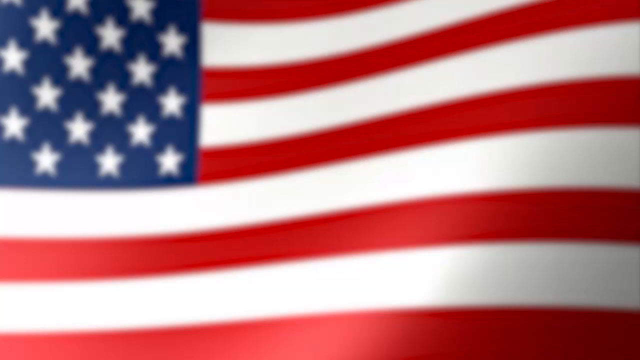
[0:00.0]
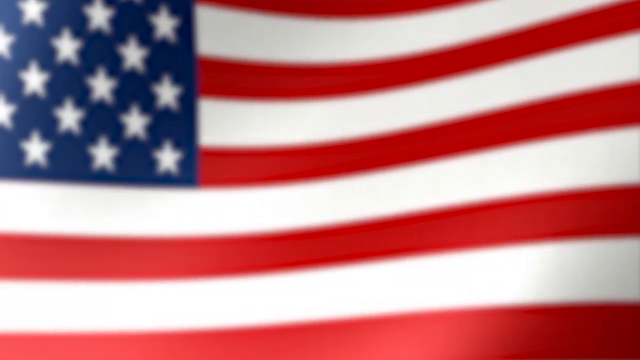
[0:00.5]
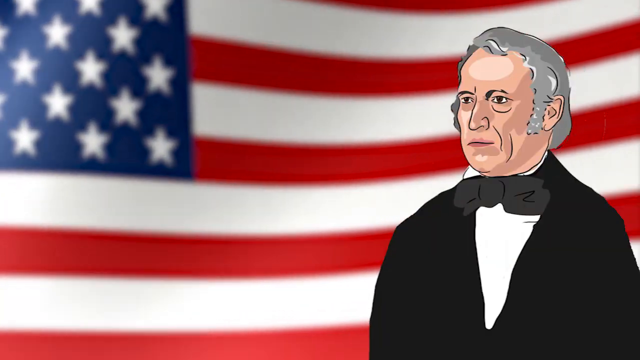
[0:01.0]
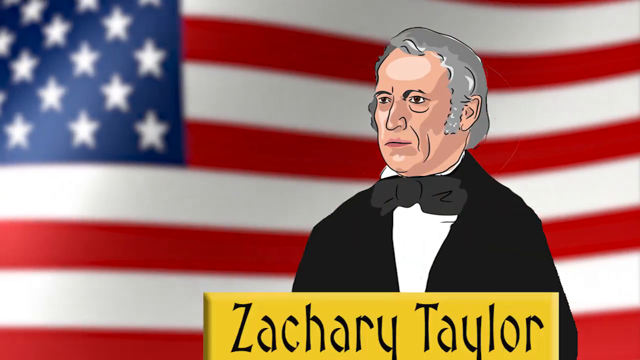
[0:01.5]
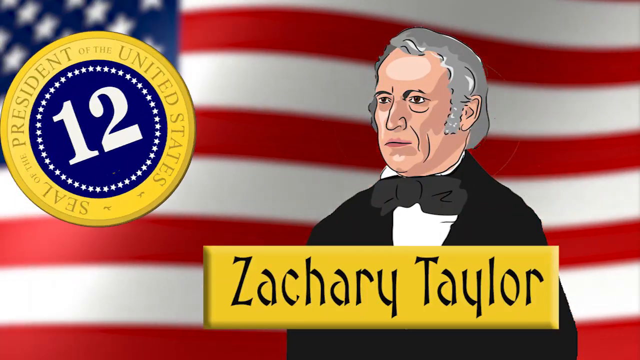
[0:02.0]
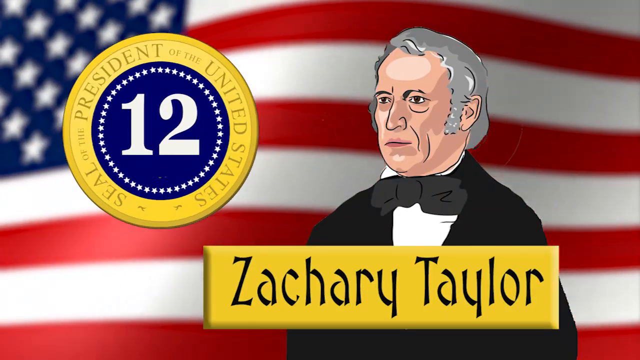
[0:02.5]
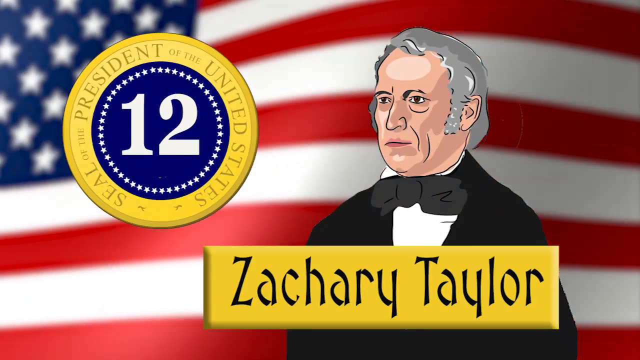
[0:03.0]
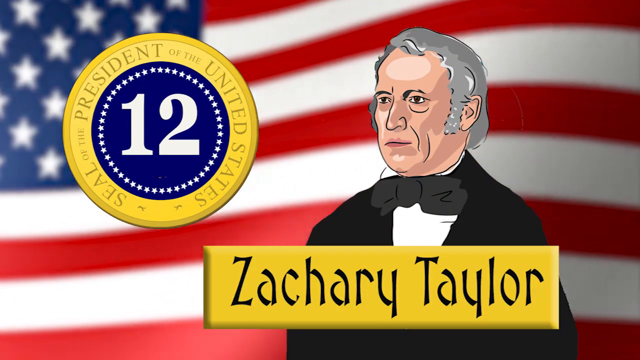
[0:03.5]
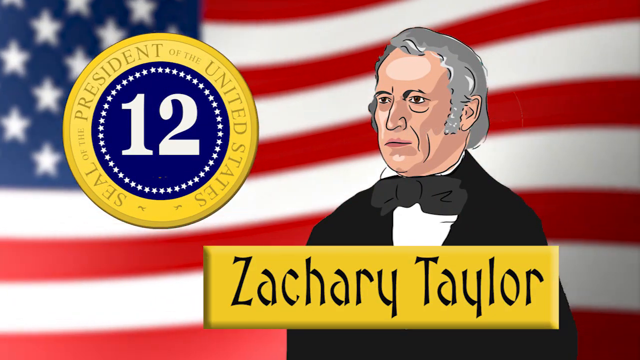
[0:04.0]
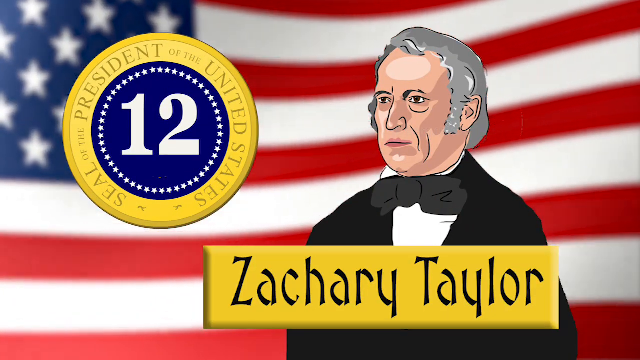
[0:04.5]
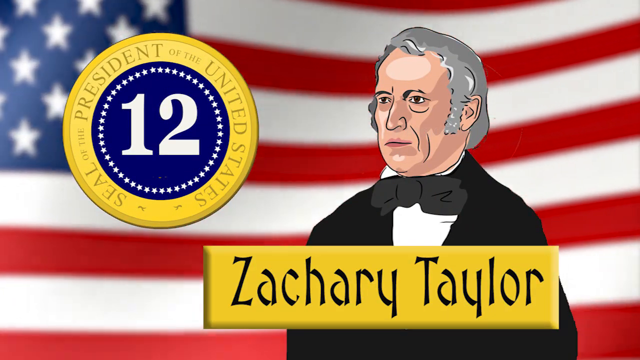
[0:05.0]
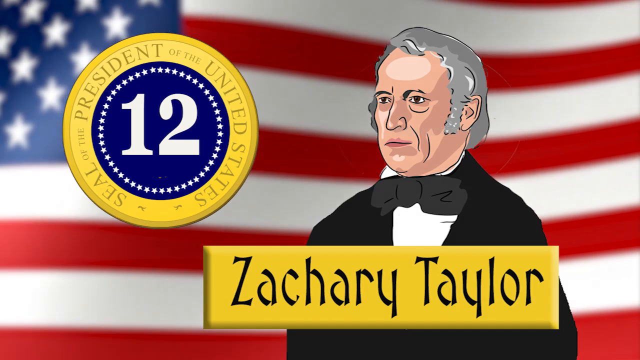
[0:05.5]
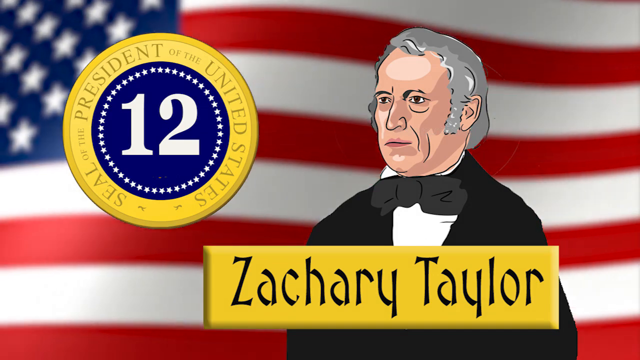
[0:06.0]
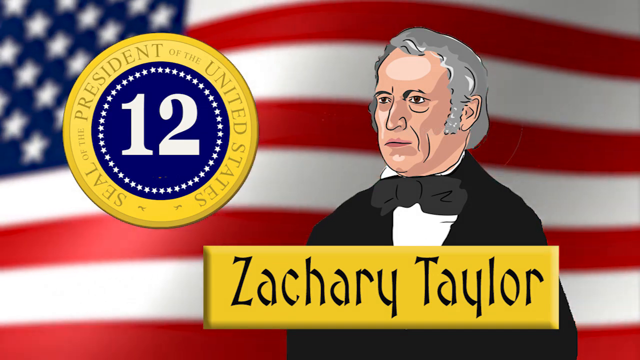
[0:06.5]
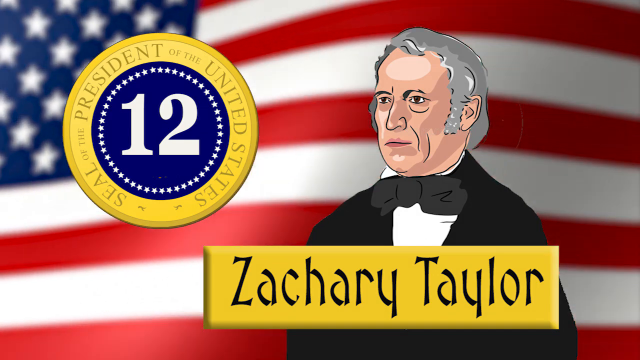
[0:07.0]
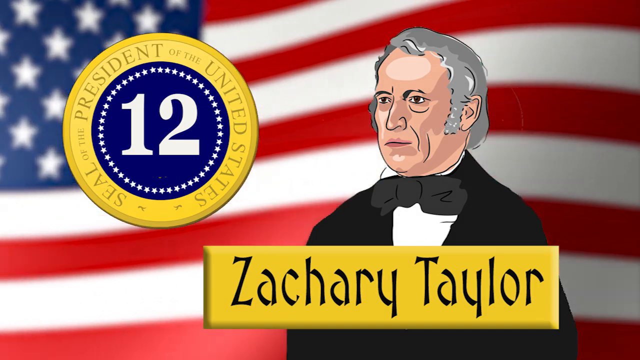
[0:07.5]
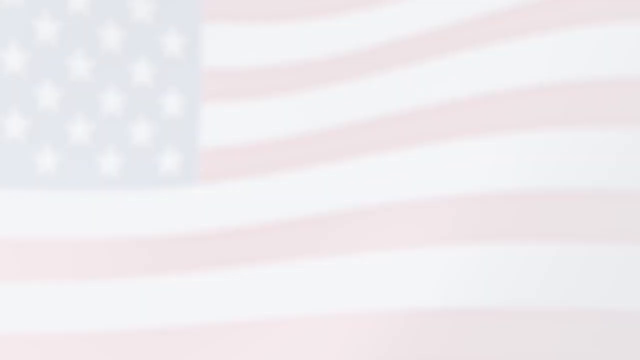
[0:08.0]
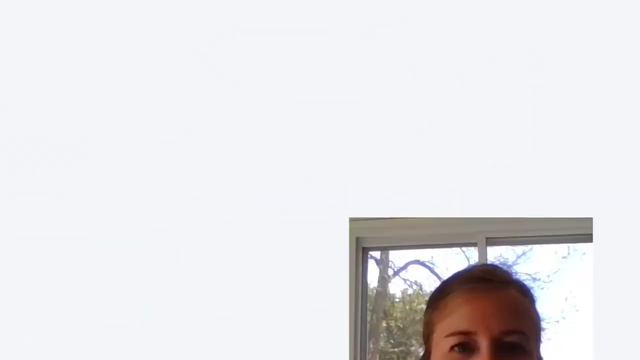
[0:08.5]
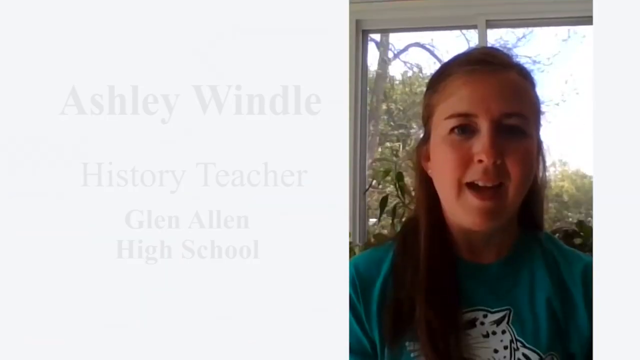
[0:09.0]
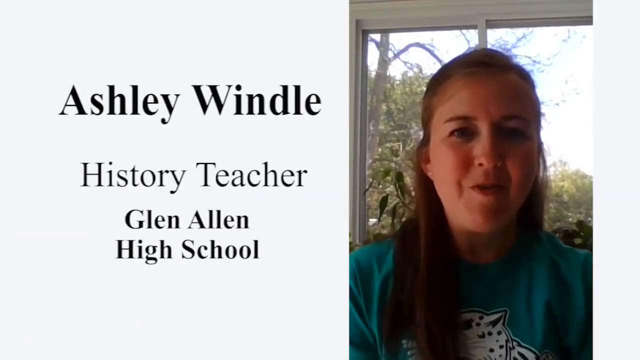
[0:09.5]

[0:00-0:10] An American flag waves on screen, and a cartoon character appears: an older man dressed like a president from the 1800s. Underneath him a label flies in that looks like a horizontal gold bar, with a gold background and black text that says "Zachary Taylor." There is also another emblem that says "President of the United States," which has a gold circle with a blue circle in the middle containing the number 12 in white, surrounded by a bunch of stars.